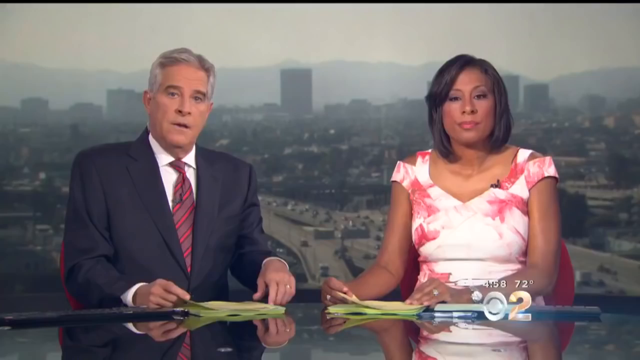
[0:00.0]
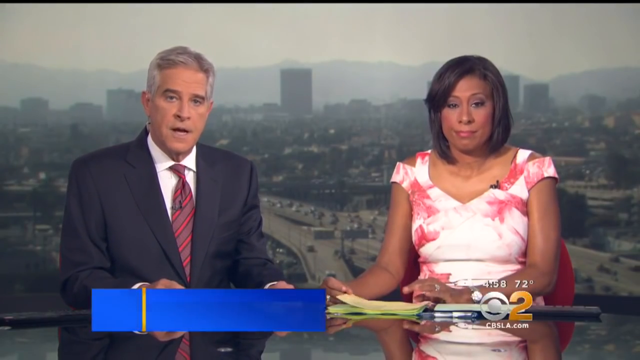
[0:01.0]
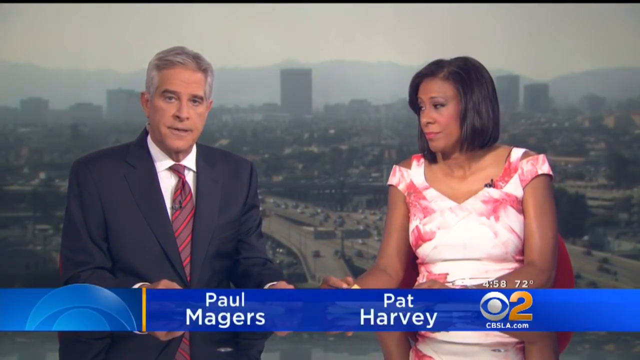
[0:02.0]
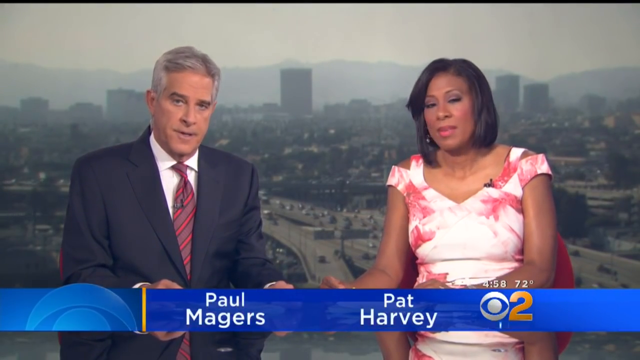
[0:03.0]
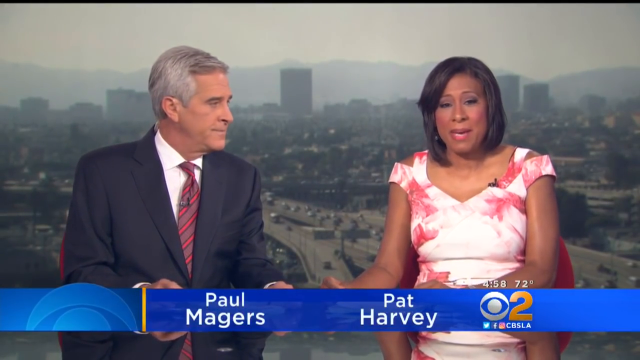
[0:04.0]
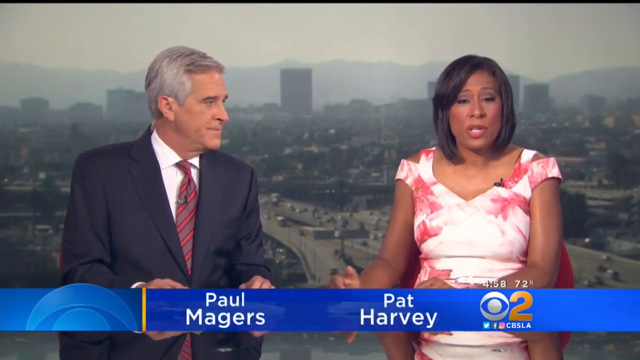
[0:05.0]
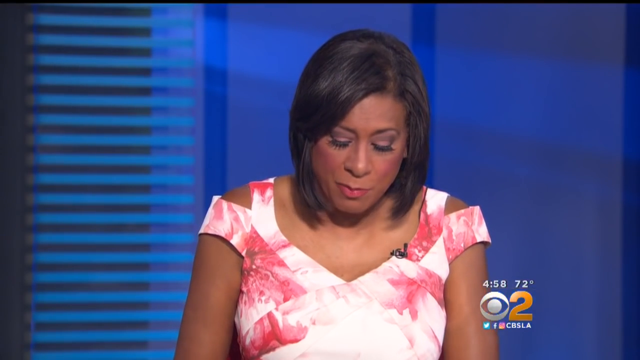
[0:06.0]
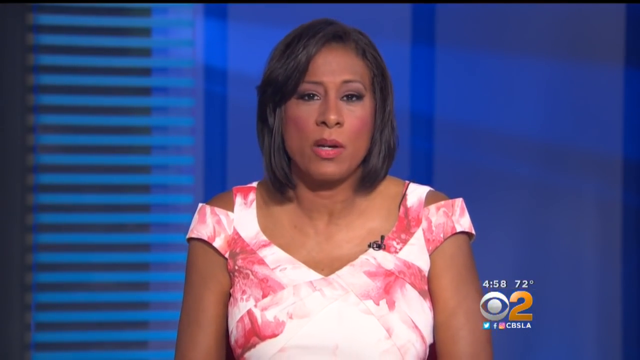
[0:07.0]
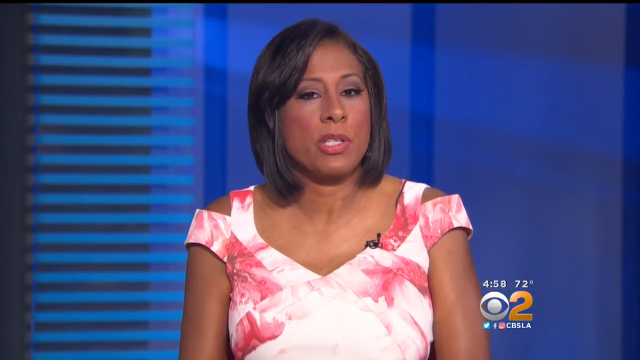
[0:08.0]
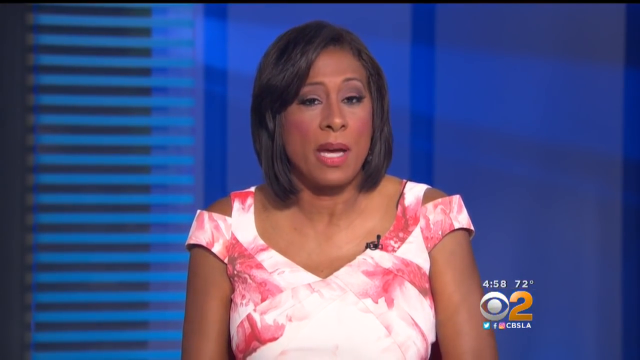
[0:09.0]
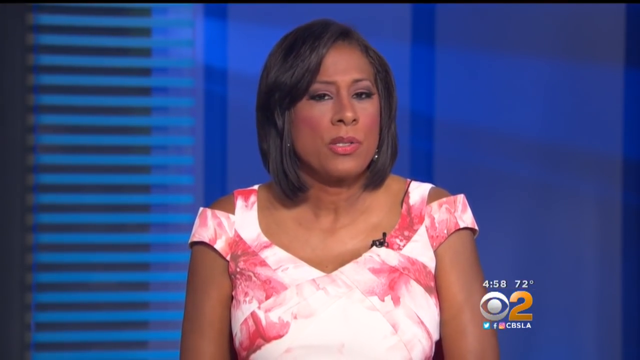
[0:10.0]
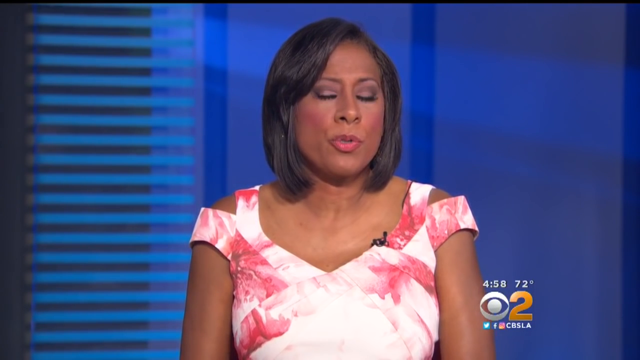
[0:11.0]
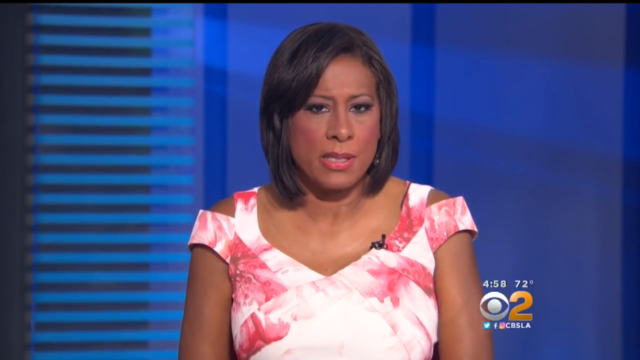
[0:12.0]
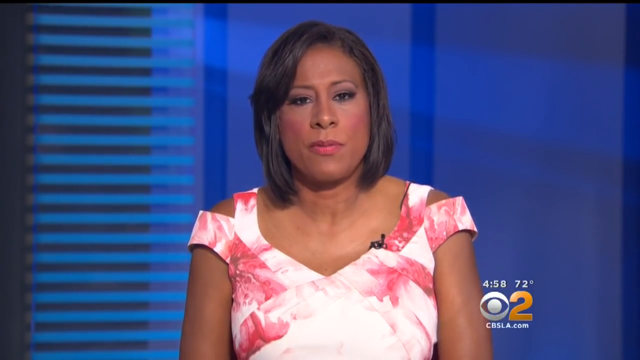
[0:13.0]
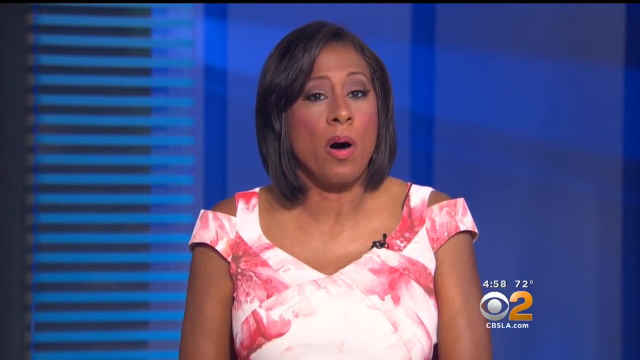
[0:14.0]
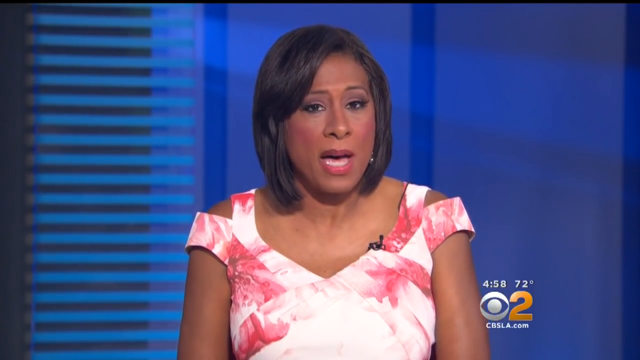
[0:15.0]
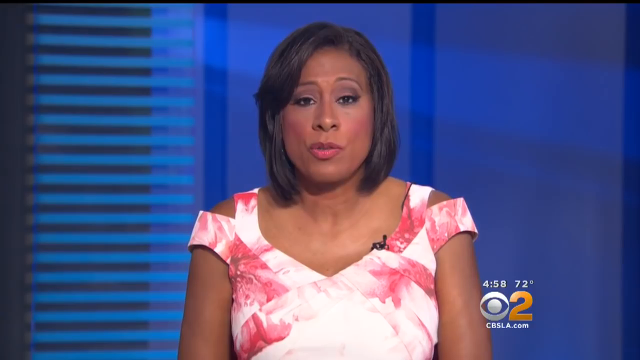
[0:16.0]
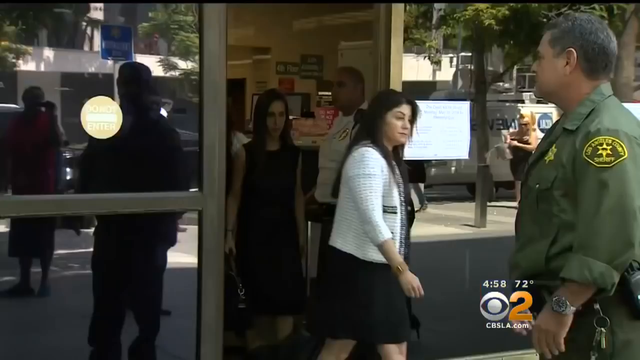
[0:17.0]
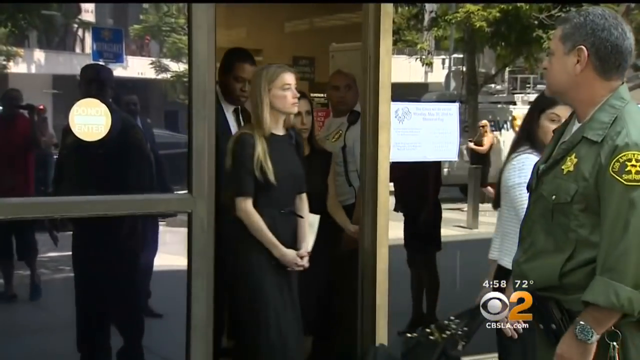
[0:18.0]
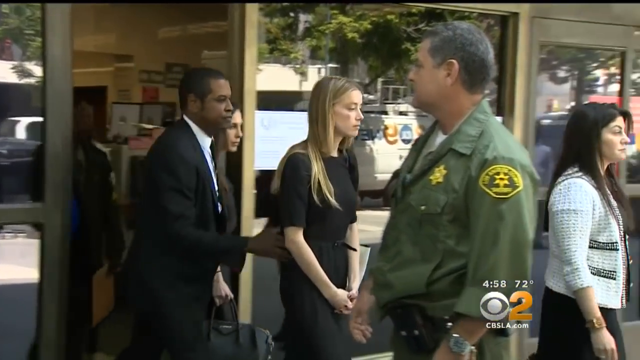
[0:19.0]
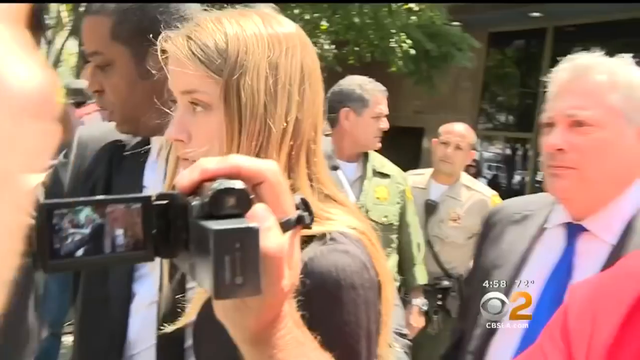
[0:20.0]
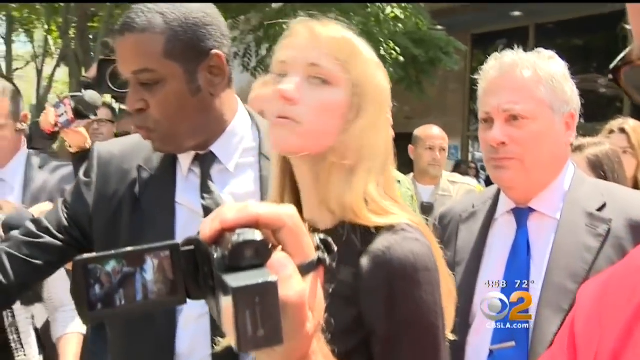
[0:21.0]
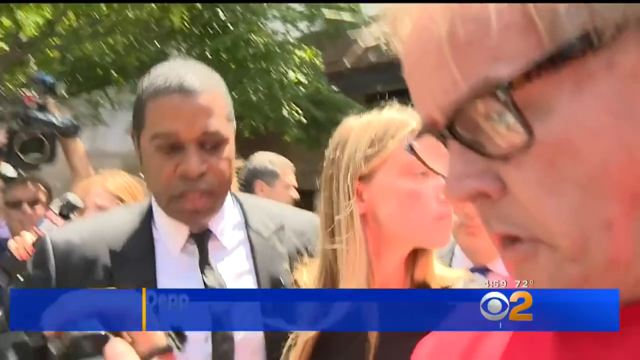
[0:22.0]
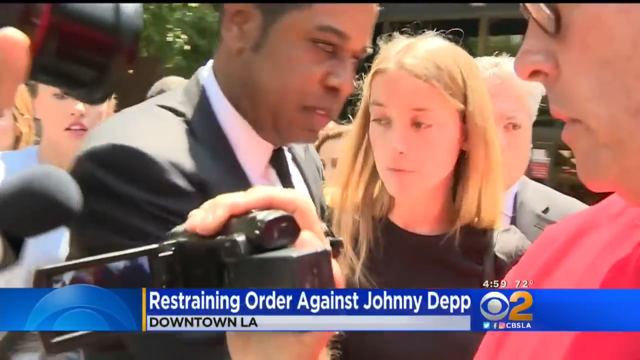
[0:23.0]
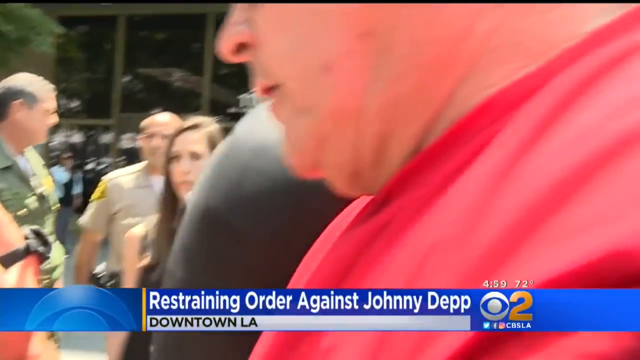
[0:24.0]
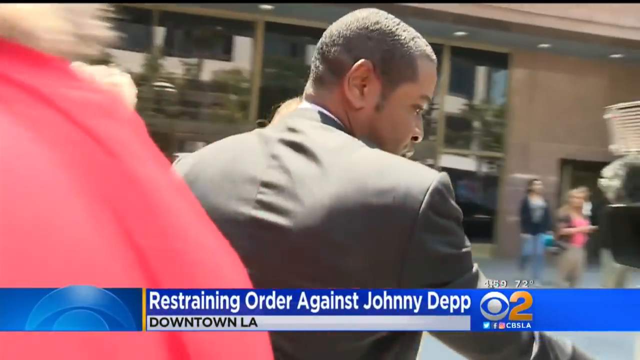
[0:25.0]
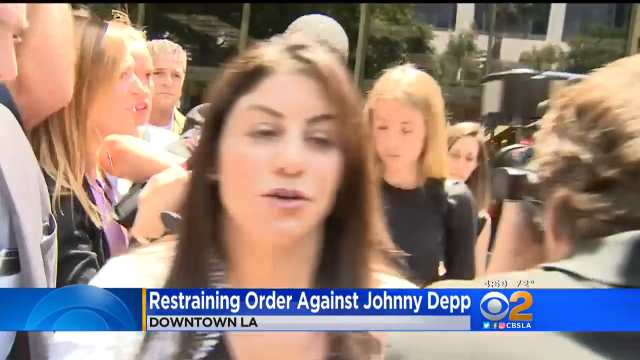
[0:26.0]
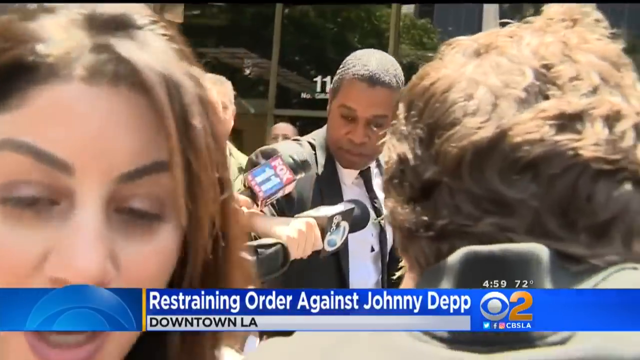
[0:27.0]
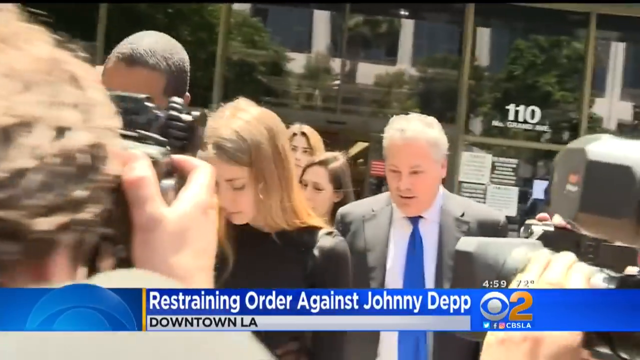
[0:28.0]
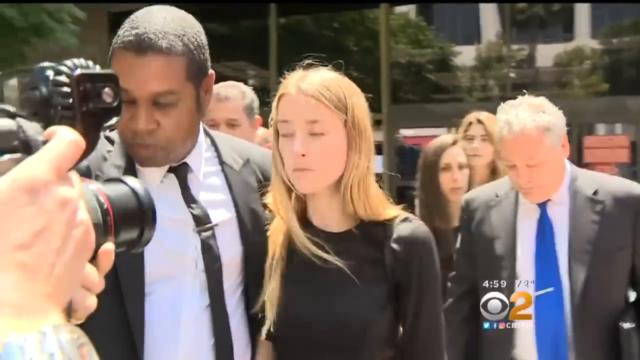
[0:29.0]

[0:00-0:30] Two news anchors are about to present the news. One is a man who seems to be about 50 years old, with gray hair, wearing a suit with a white shirt and a red tie; his name is Paul Majors. On the right is the other anchor, a woman with black hair in a white and red dress, named Pat Harvey. The broadcast is from the news channel CBS LA, whose logo appears to be some kind of I with the number two. The female anchor then looks toward a different camera and is alone in the shot, talking about something that has happened. Next comes footage of a young woman with long blonde hair in a black dress, accompanied by many people, including what may be a security officer or policeman and a bodyguard who is sort of protecting her.